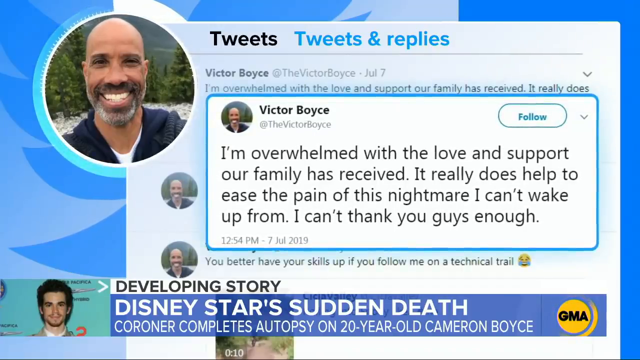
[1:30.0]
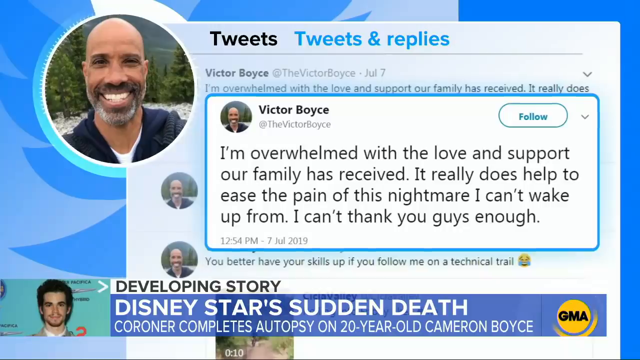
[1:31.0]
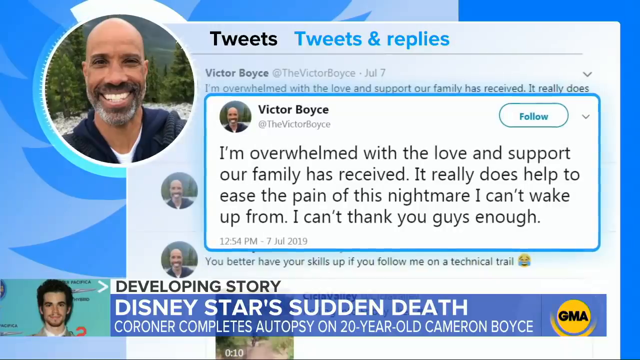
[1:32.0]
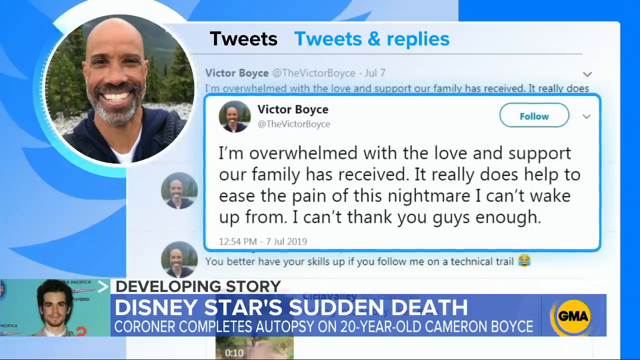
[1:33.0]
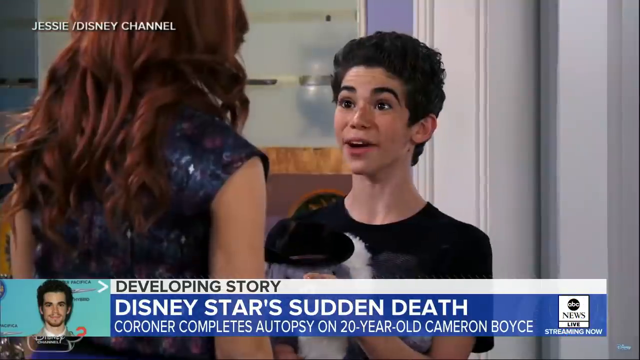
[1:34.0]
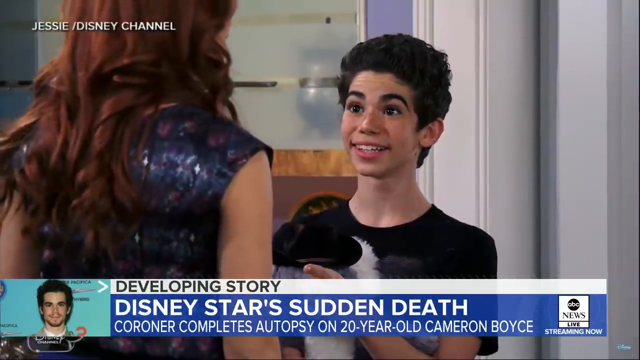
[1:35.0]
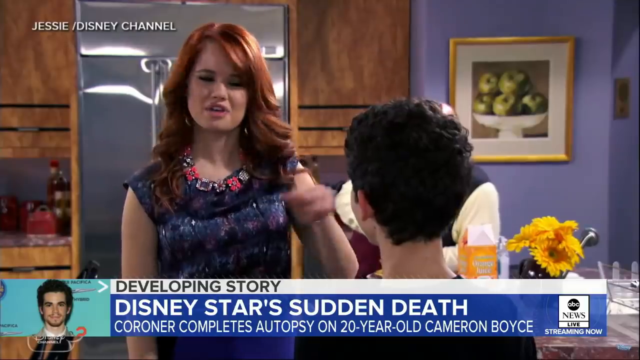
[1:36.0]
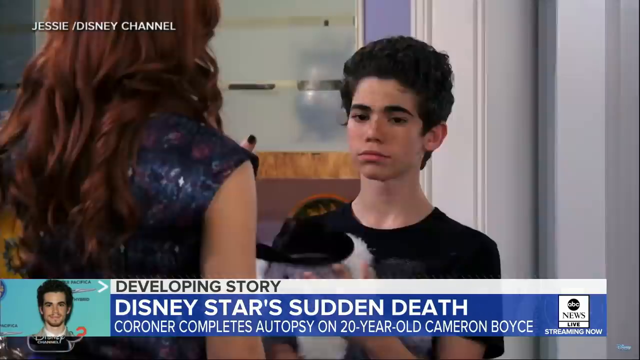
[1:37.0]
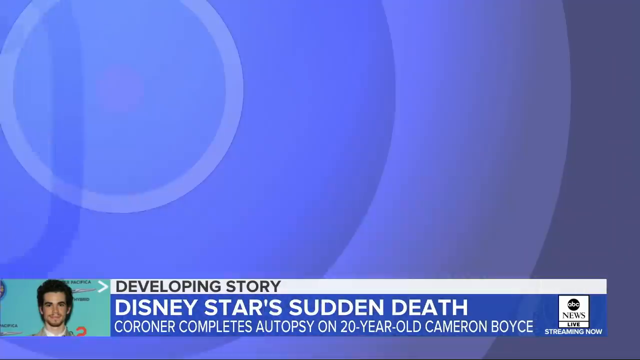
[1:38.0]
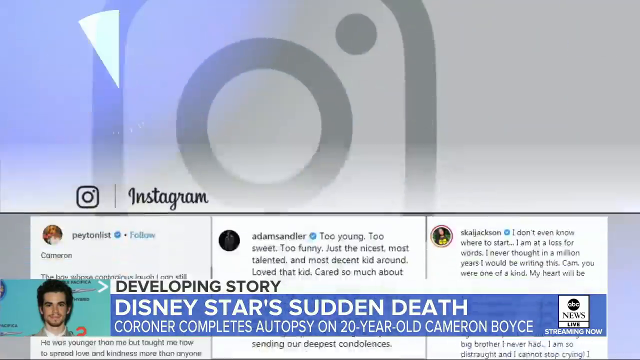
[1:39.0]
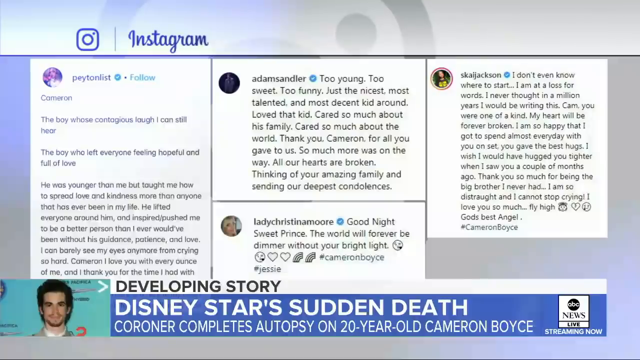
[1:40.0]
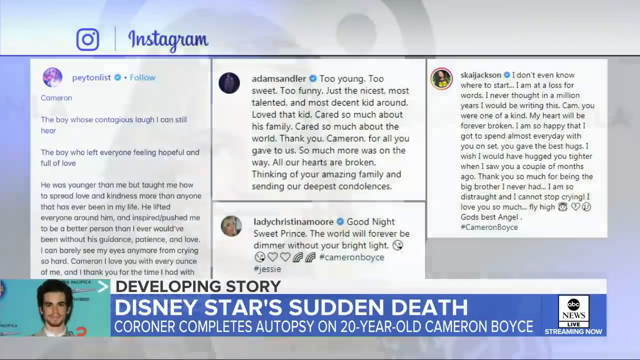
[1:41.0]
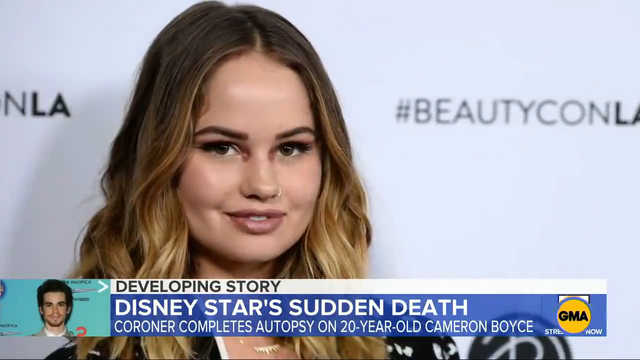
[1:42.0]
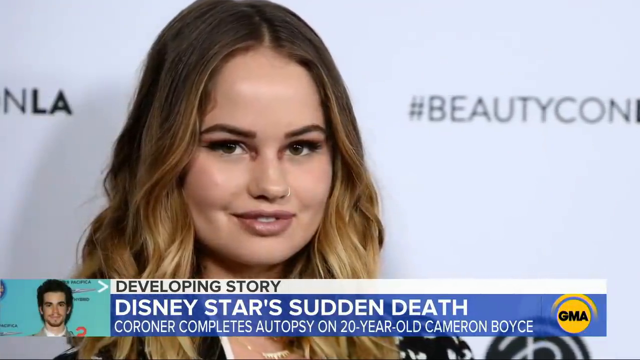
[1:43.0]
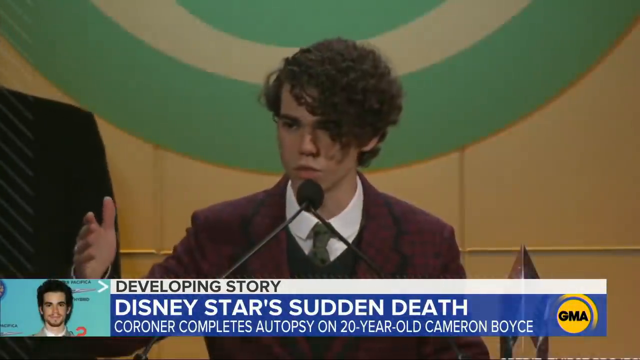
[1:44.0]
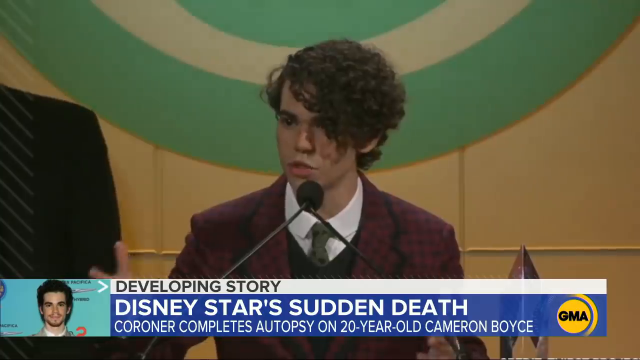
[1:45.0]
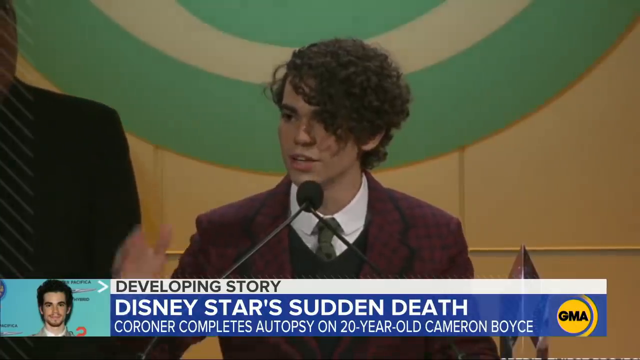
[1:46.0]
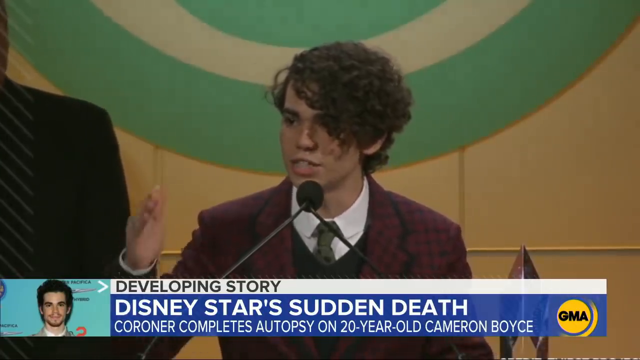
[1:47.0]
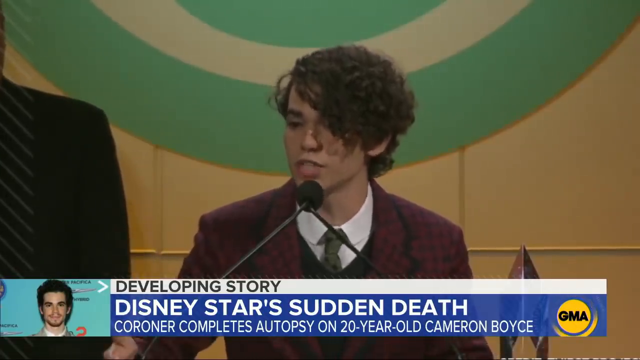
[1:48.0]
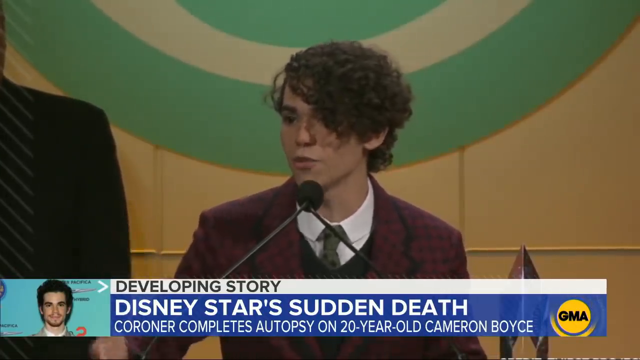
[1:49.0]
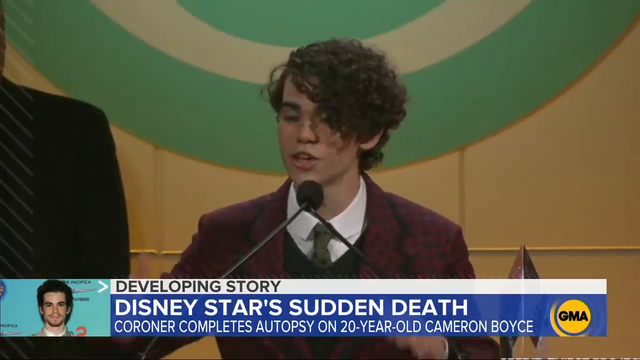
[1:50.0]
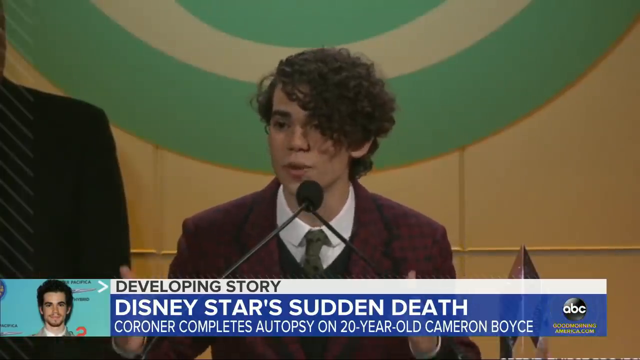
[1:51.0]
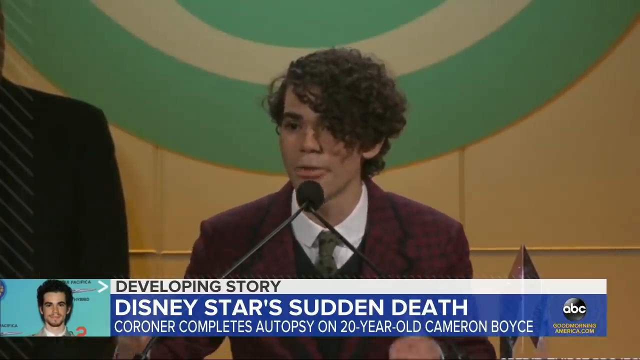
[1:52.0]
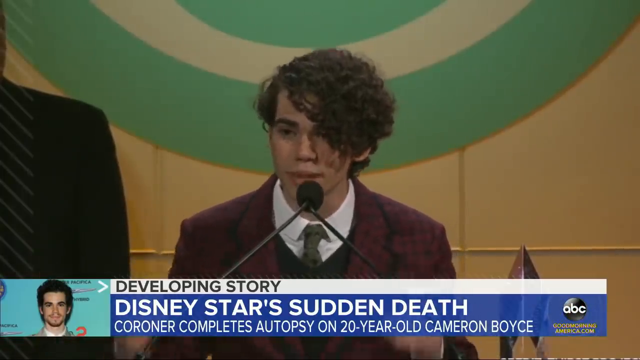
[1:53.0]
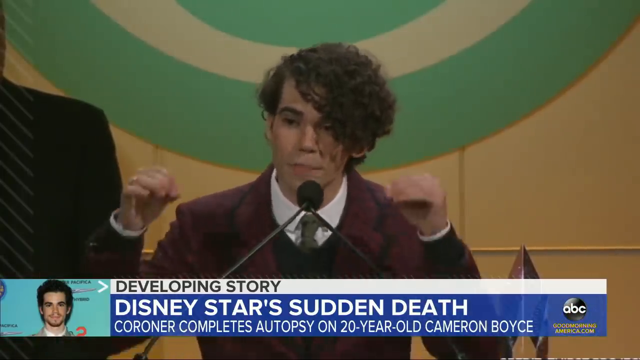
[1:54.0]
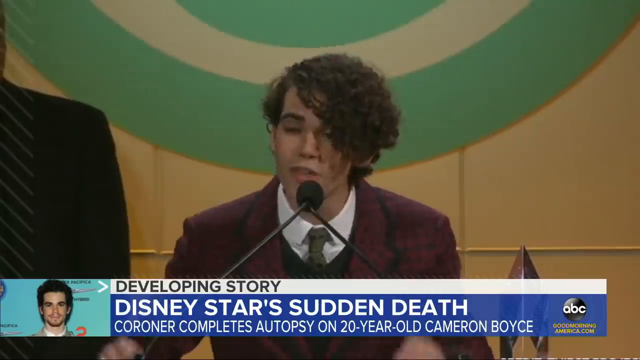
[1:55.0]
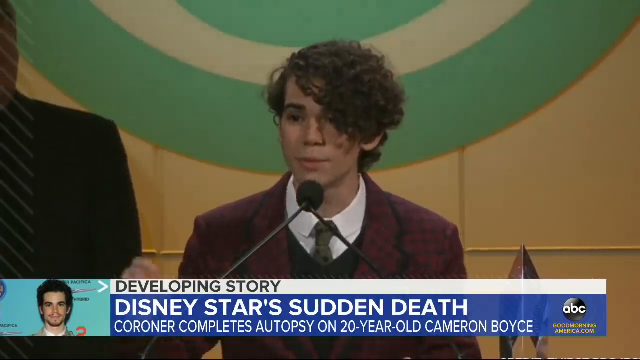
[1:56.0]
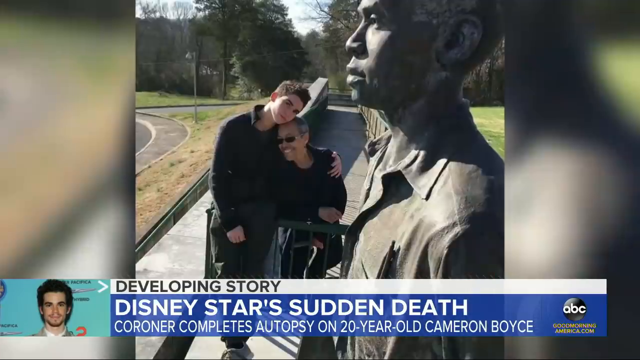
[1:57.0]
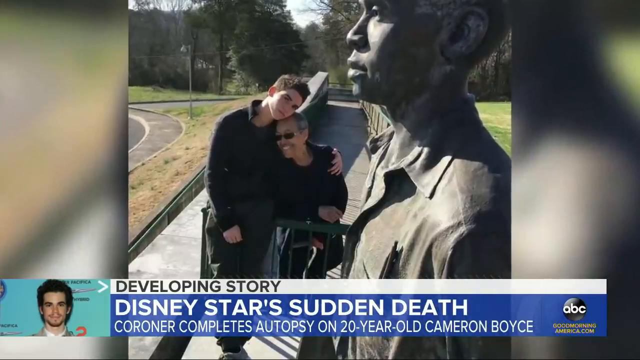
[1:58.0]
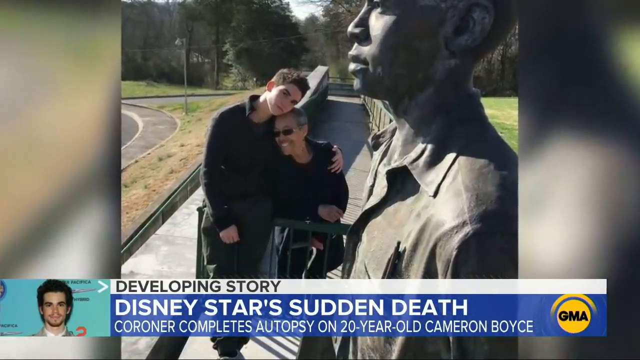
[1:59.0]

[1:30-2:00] The overlaid tweet is outlined in blue. Victor's profile picture is a selfie in which he is bald, wears a dark blue jacket, and is outside with trees behind him and some rocks on the ground. The next shot is a snippet from the Disney Channel's Jesse, showing a younger Cameron Boyce speaking to Debbie Ryan in character; she has dark red hair and wears a blue short-sleeve blouse. They seem to be talking to each other in an almost sibling-like way. The next shot shows Instagram messages, with a banner bearing the Instagram logo at the top and snippets of messages below it from Peyton List, Adam Sandler, Sky Jackson and Lady Christina Moore. A photo of Debbie Ryan posing in front of a camera appears very briefly. The next shot shows Cameron Boyce standing at a podium talking to an audience, seemingly presenting, against a yellow and green wall. He uses his hands to gesture as he speaks, seems very passionate and earnest, and bops his head while using his hands to emphasize his points. The next shot shows the same sunny photo from before from a different perspective of the same pose, with the woman apparently his mom.